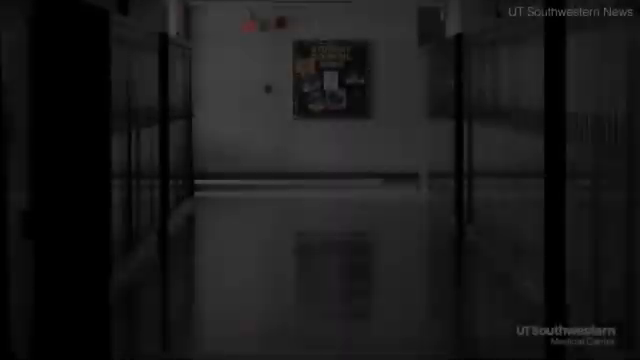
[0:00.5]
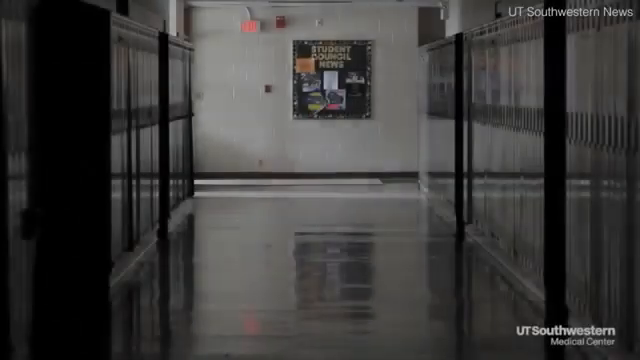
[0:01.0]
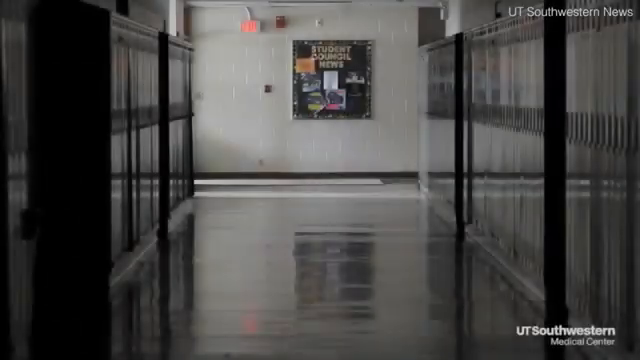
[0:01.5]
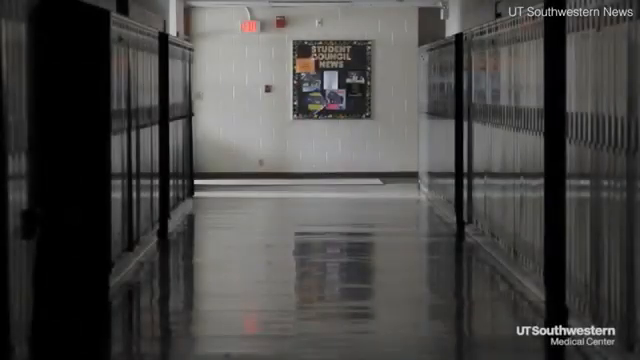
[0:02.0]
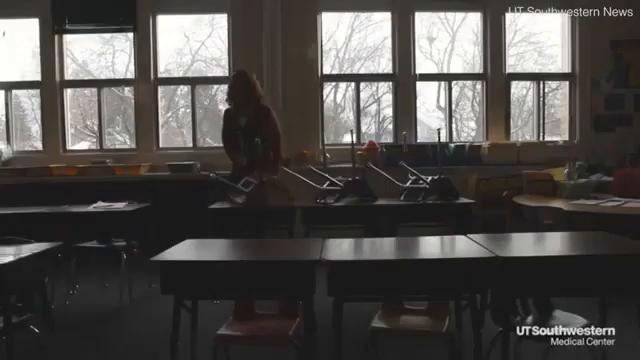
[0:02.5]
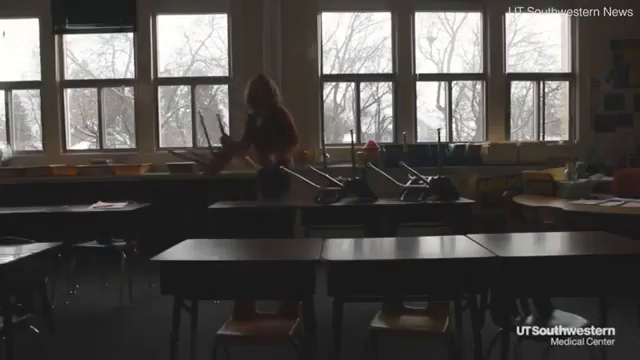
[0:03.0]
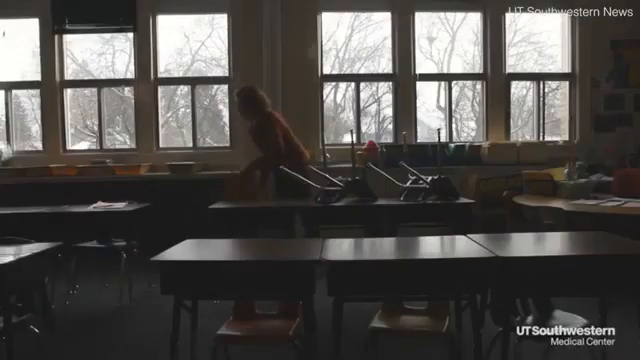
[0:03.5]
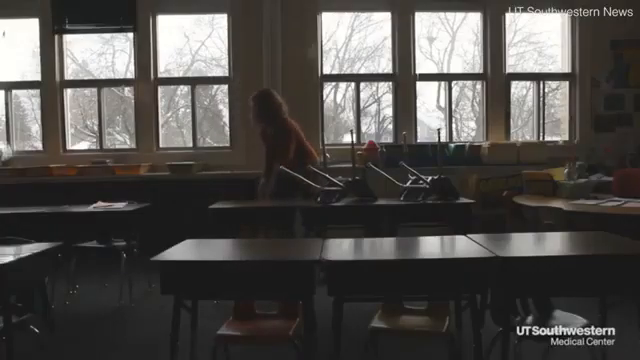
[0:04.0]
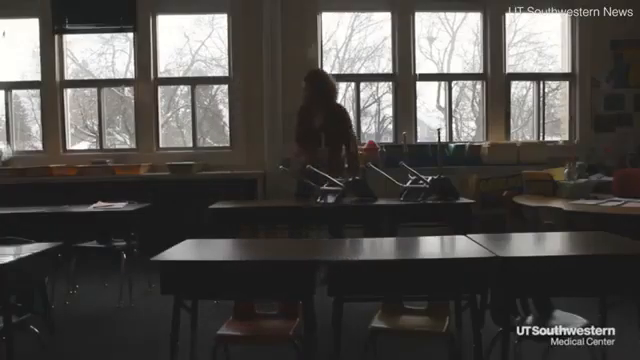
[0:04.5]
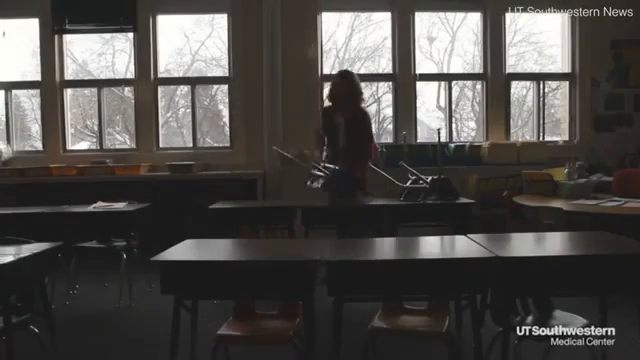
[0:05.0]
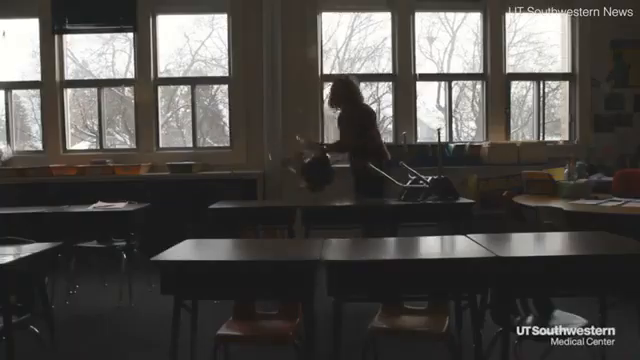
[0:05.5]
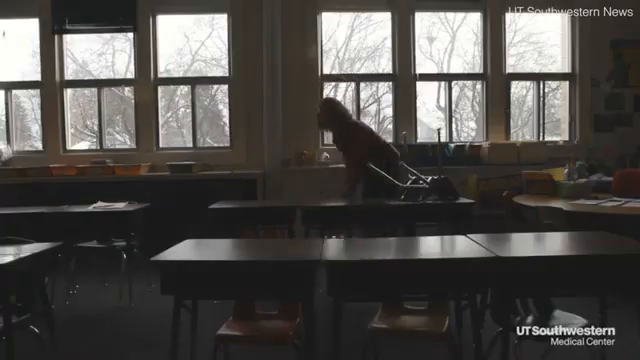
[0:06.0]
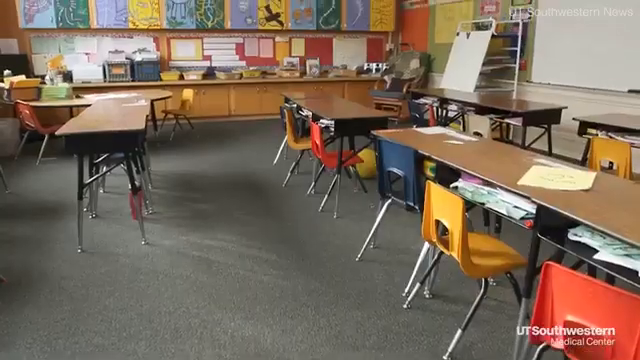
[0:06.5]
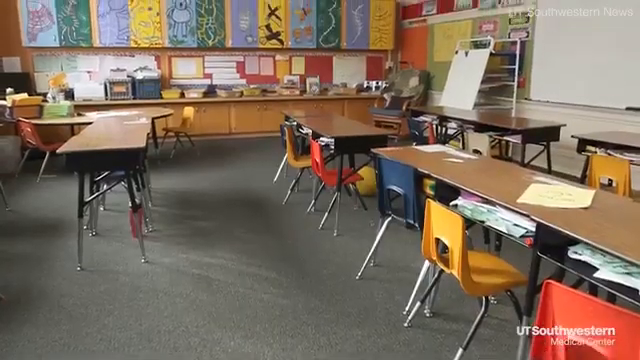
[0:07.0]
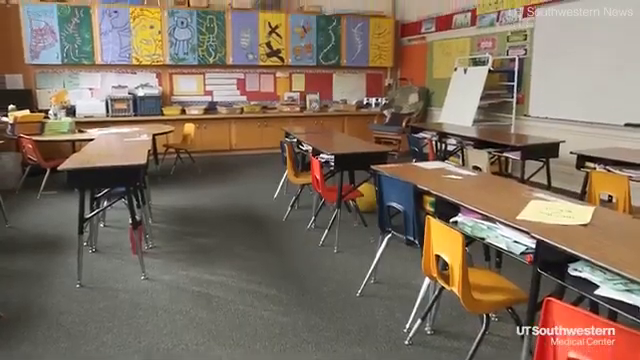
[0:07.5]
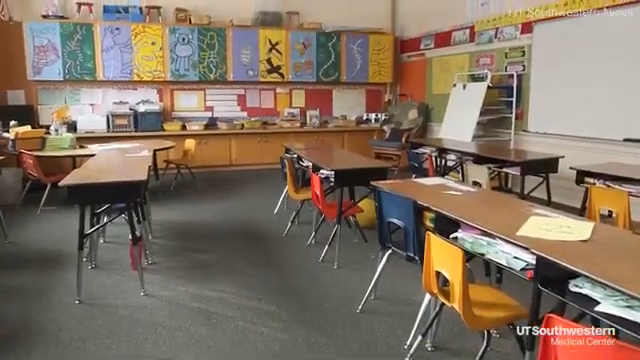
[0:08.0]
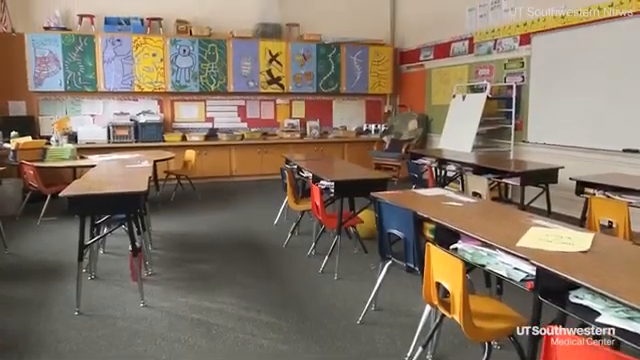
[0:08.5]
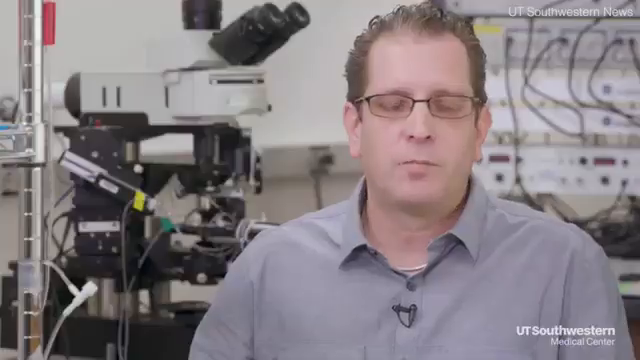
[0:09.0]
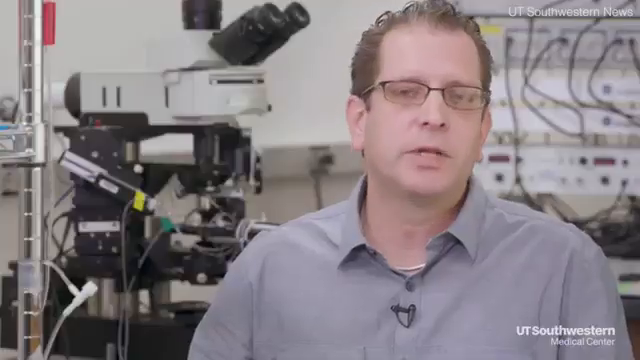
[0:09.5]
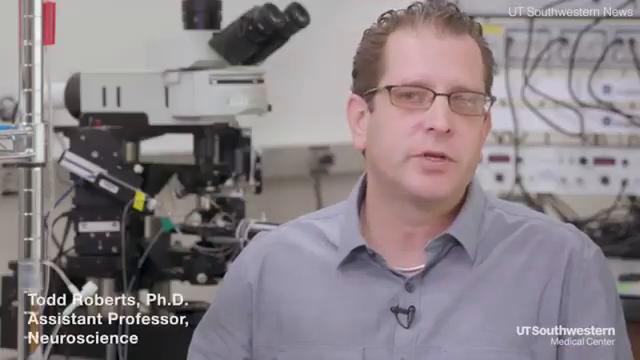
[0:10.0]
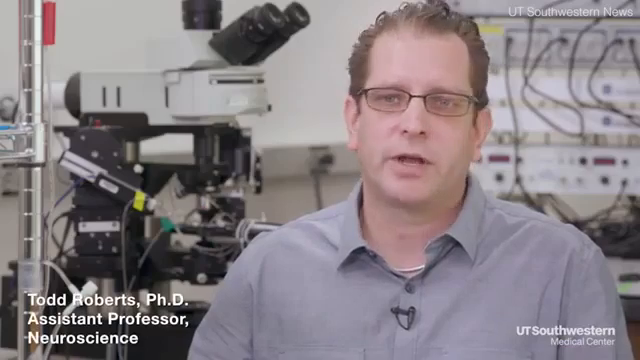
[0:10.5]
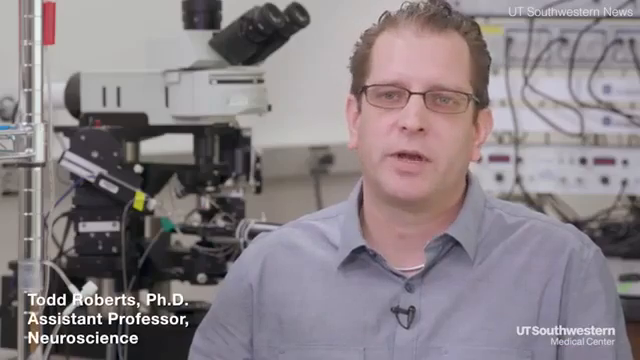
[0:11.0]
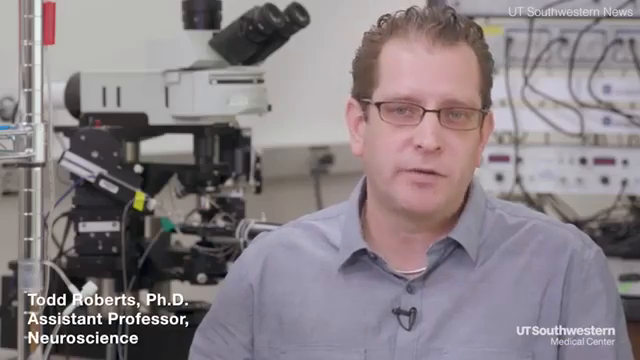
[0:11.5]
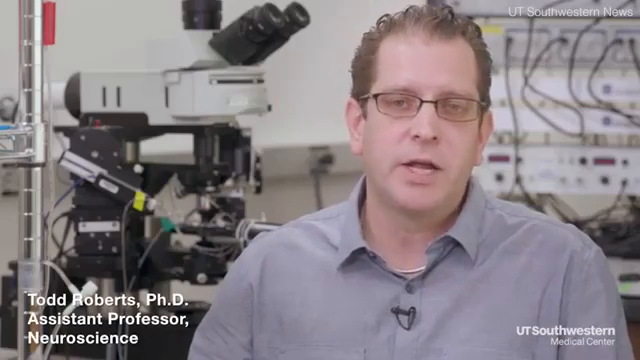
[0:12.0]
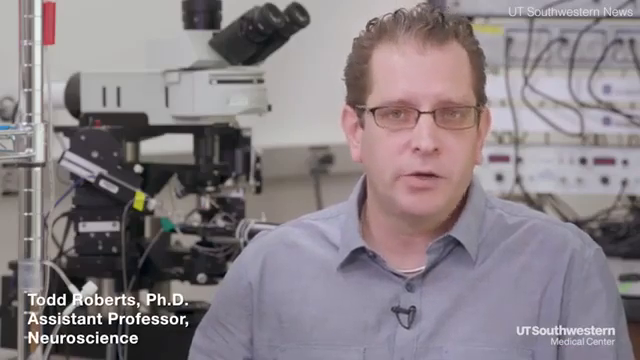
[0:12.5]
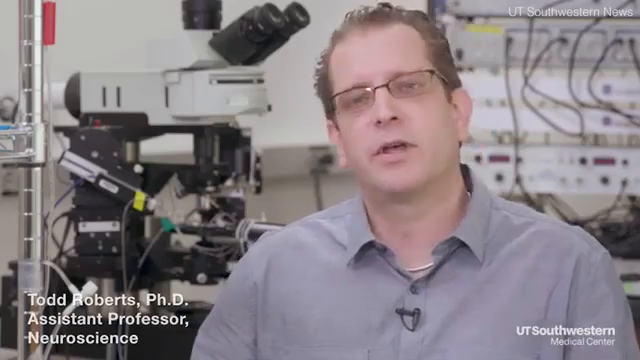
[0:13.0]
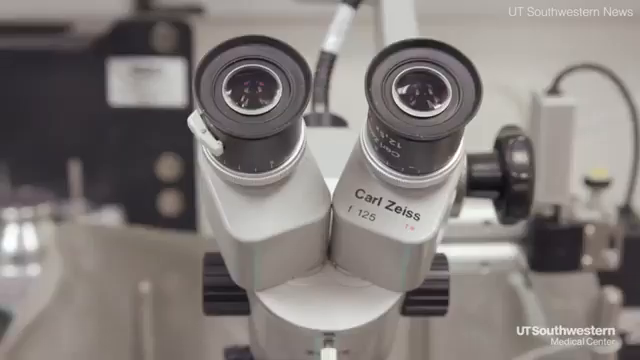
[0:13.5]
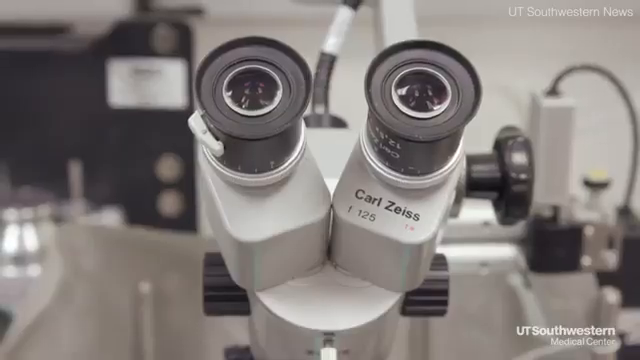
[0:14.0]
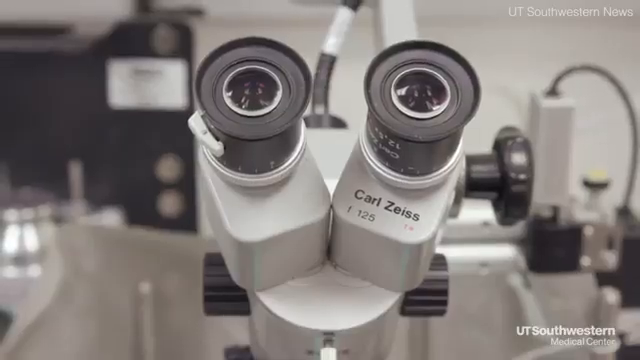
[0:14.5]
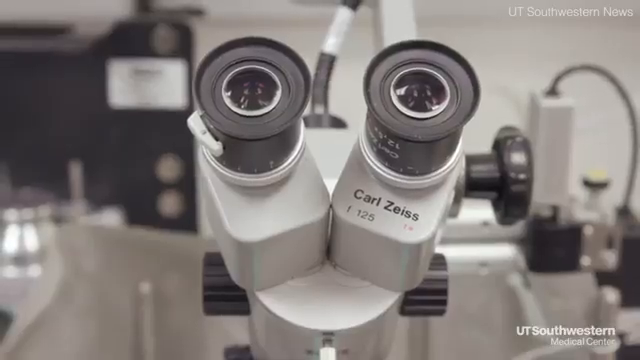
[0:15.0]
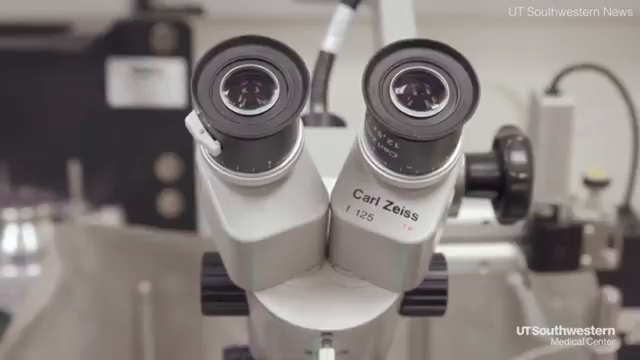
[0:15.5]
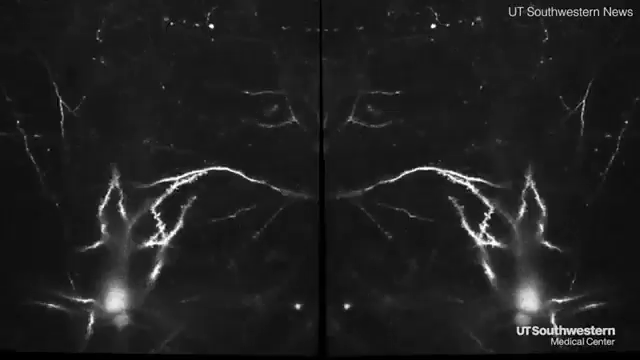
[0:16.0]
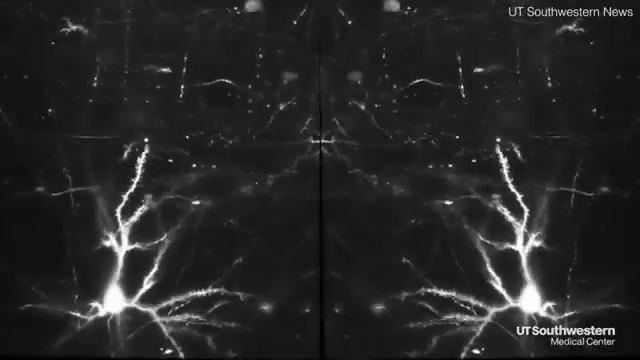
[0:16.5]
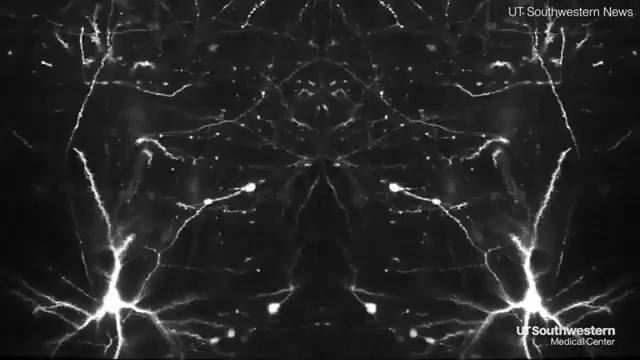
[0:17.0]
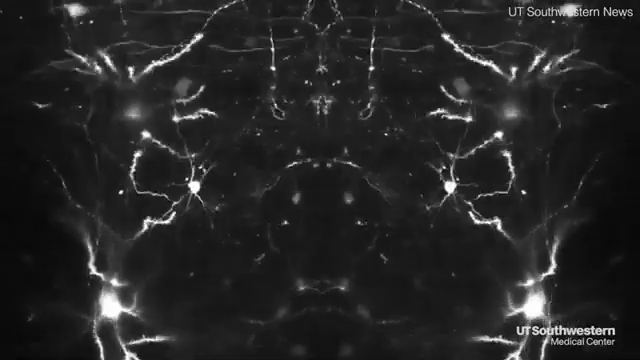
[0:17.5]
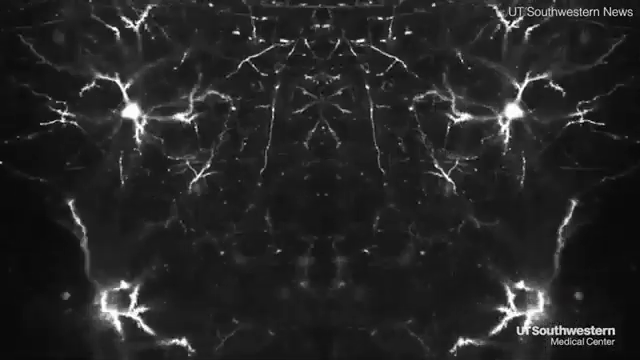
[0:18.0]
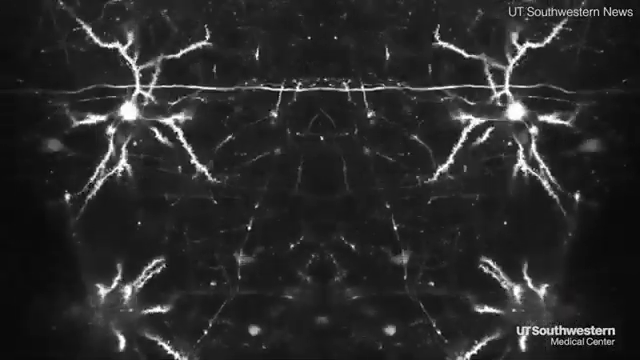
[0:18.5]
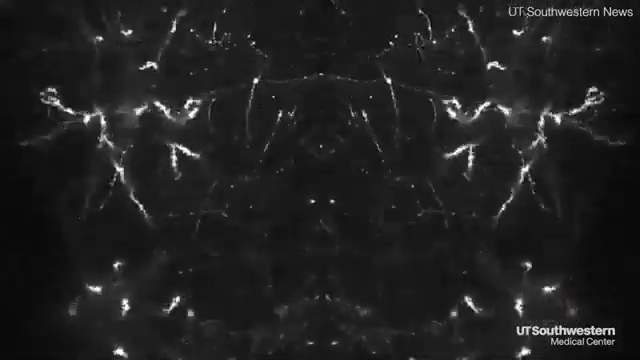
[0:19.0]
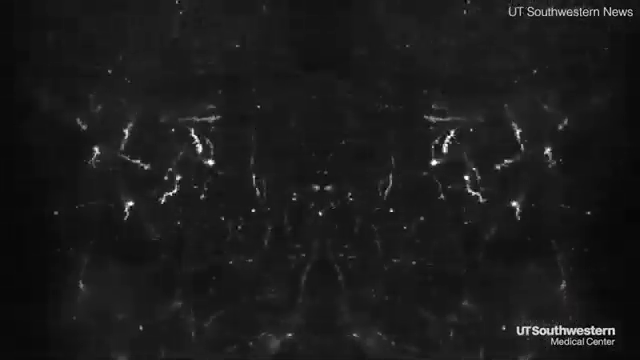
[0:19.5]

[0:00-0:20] The video opens on what looks like a school hallway with the lights off. A row of lockers and a shiny floor are visible, and a bulletin board at the end reads "student council news." The hallway is dark, as if school hasn't opened yet. The scene switches to a classroom with a bunch of desks and a wall of windows, where what looks like possibly a teacher is taking the chairs off the desks and getting the classroom ready. Next, a classroom appears in daylight, much brighter, with a bunch of desks facing a whiteboard; they are filled with papers and colorful chairs, and the cabinets have all been painted. The video then switches to what looks like a science lab, where a man in his 40s wearing glasses and a gray shirt is talking behind a microscope, with the text "Todd Roberts PhD assistant professor." The camera closes up on the microscope's eyepieces, then appears to show what the microscope is viewing, followed by a bunch of birds in a cage.